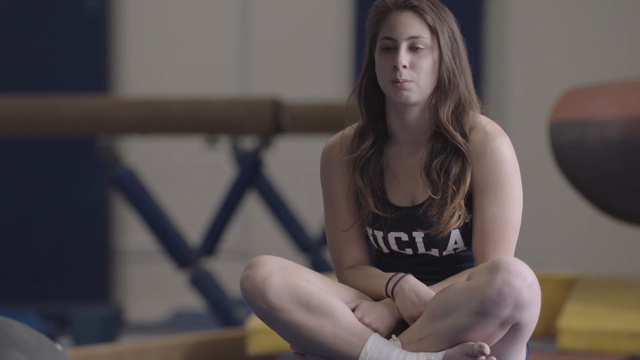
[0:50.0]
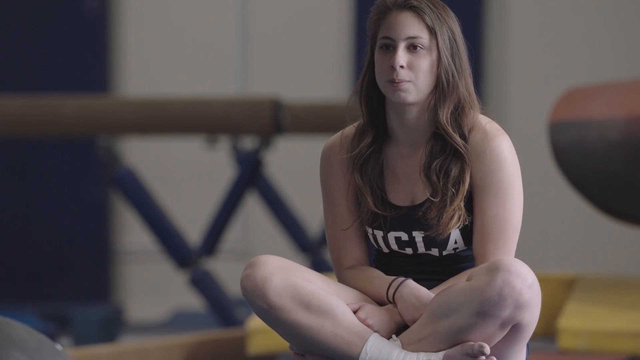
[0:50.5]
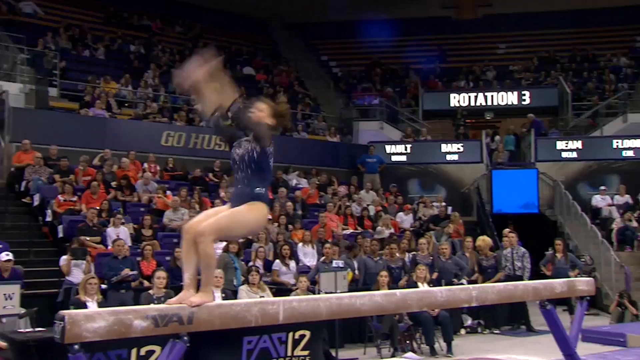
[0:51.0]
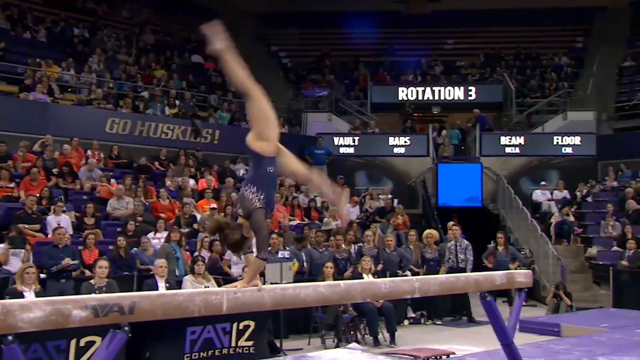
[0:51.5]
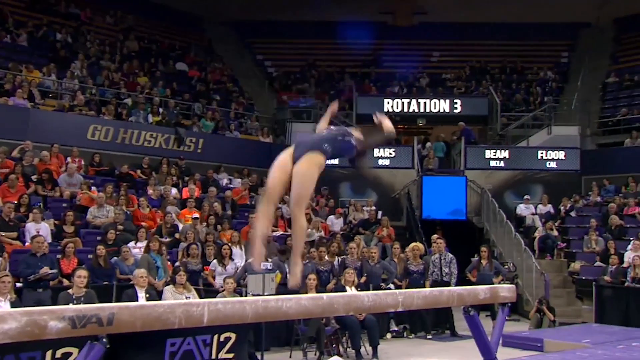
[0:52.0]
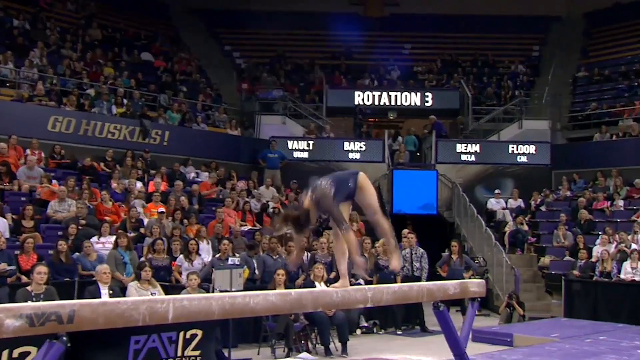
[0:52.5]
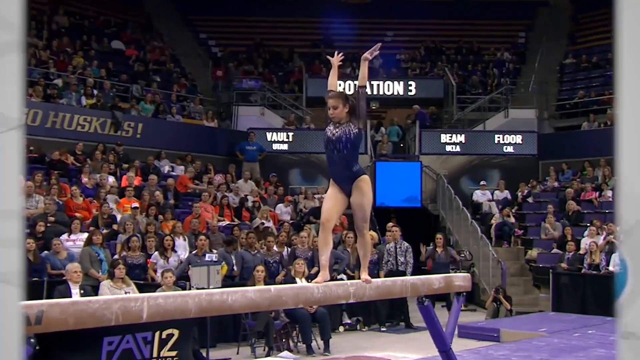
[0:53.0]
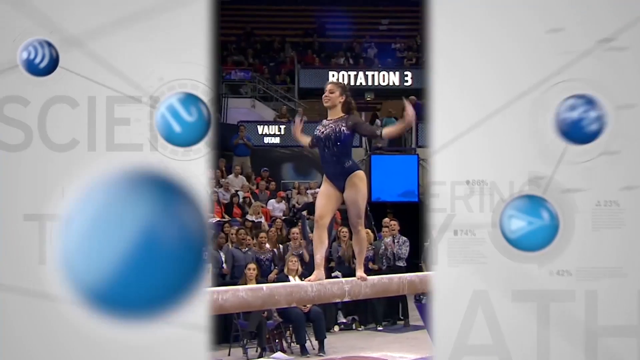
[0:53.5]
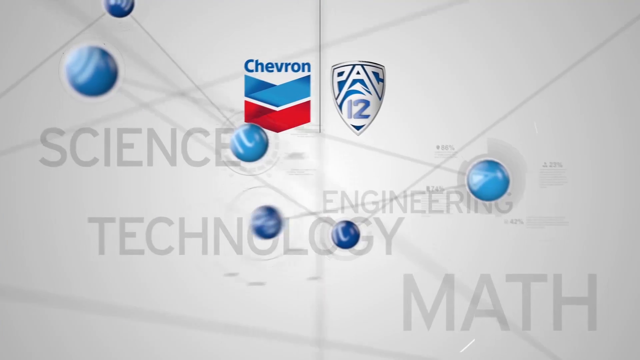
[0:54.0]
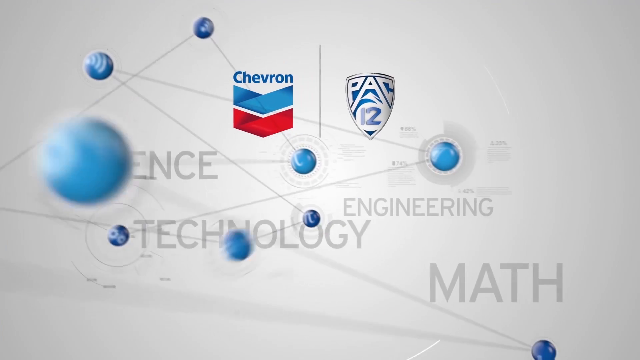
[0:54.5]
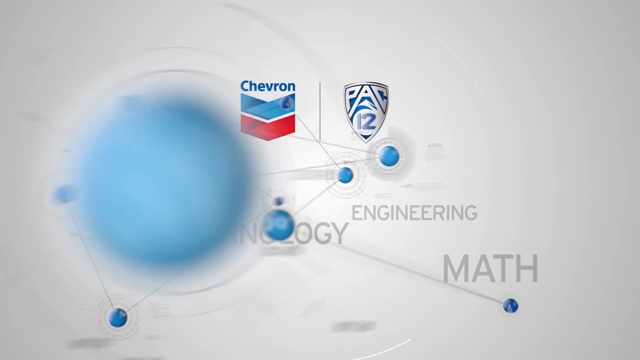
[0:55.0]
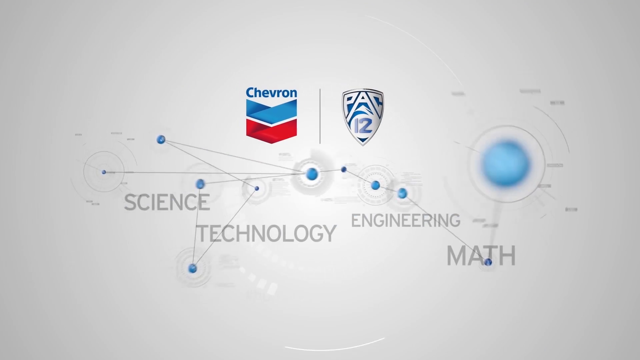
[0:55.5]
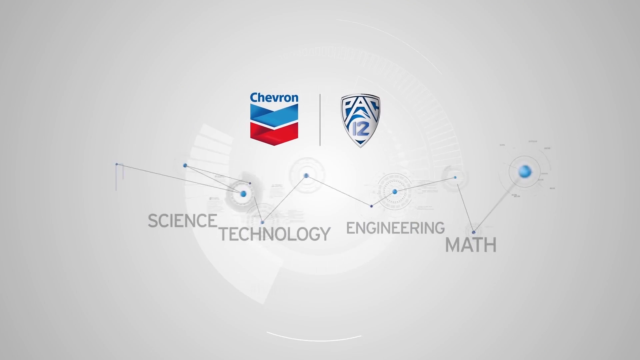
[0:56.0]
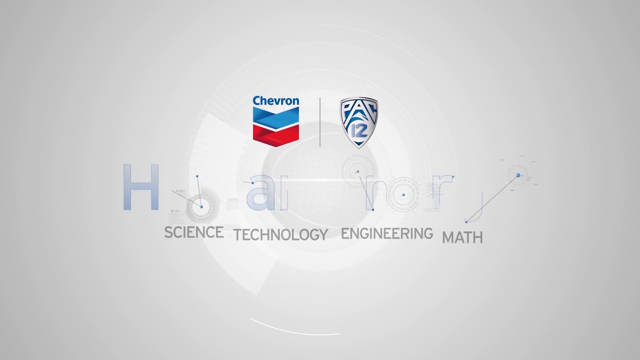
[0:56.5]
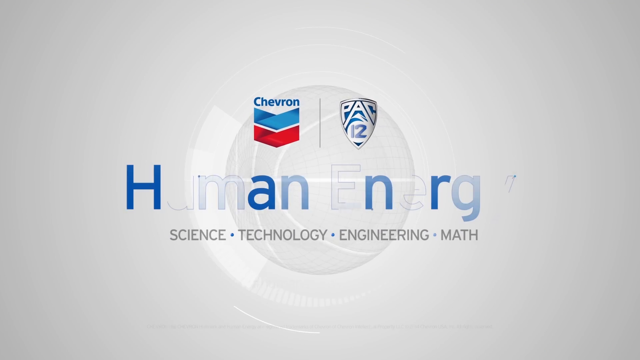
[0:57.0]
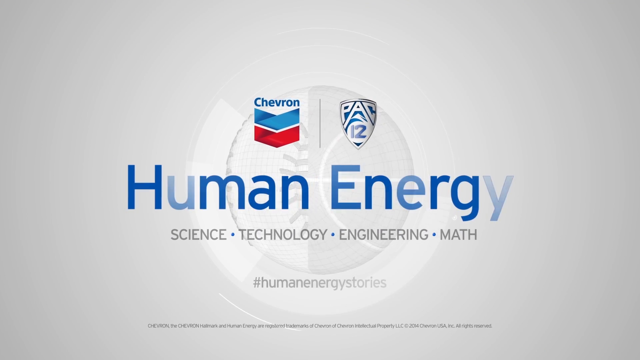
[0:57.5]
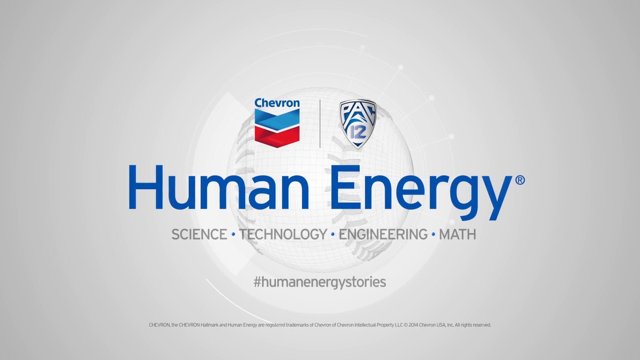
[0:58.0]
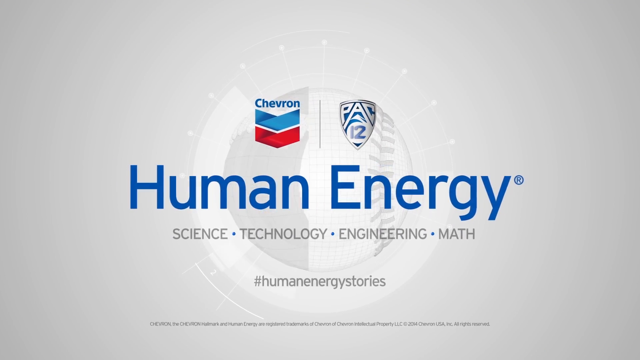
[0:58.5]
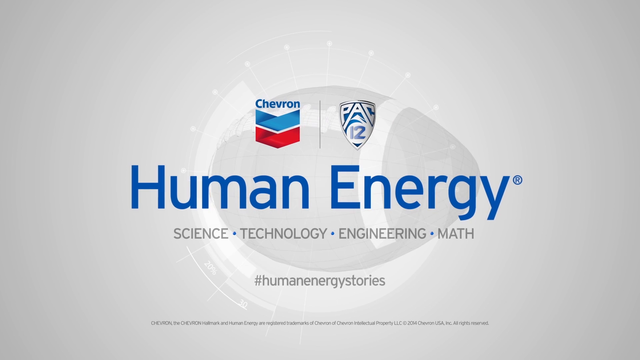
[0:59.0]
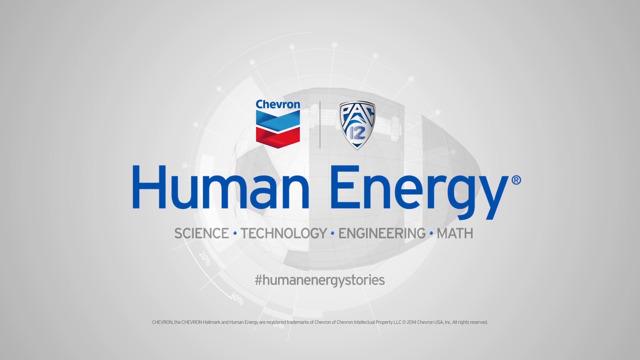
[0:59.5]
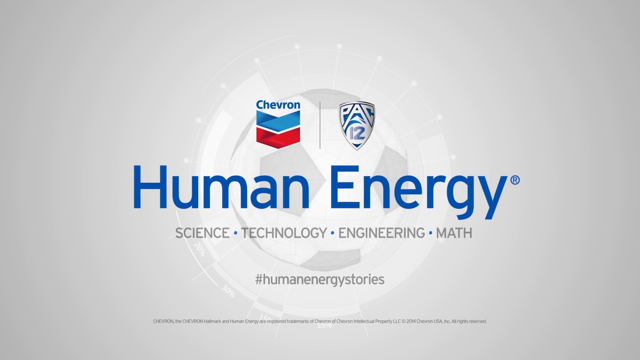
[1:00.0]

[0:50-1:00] She sits with her legs crossed, wearing a blue gymnast uniform of sorts that says "UCLA" across the front, and speaks into the camera. The scene shifts to an actual event with fans in the background. On the balance beam she does some flips, then poses as she lands on the beam with her arms extended up. This transitions to a white background showing a Chevron logo and a Pac-12 logo, with several blue dots moving around; underneath, text reads "human energy science technology engineering and math."